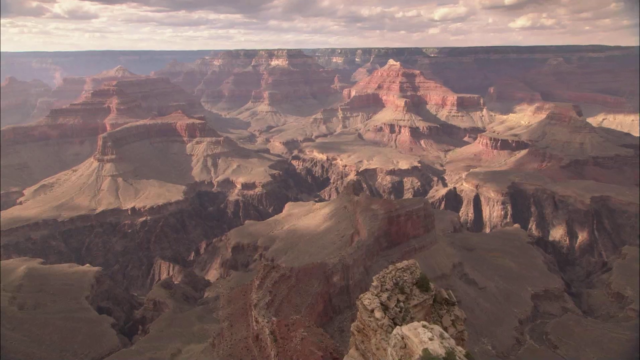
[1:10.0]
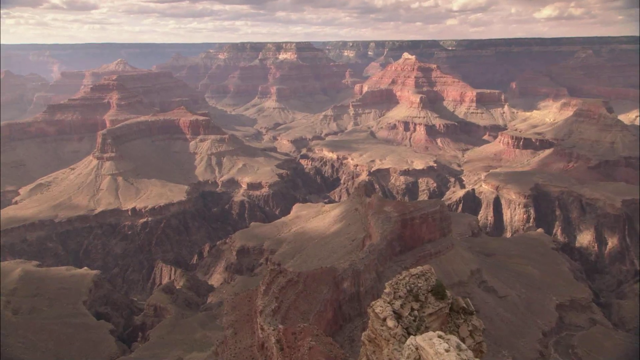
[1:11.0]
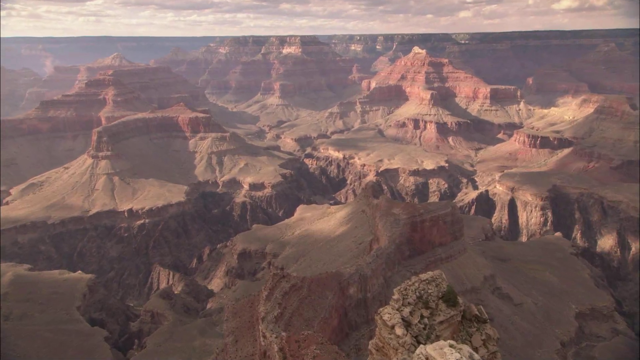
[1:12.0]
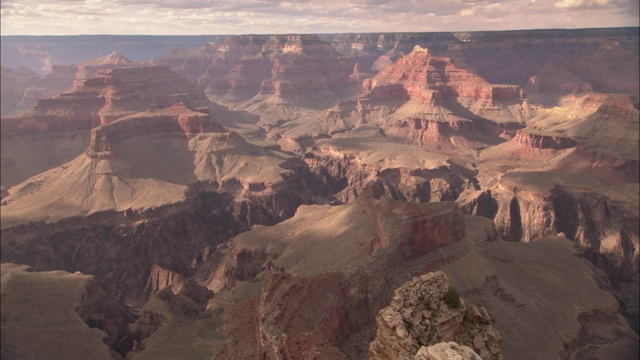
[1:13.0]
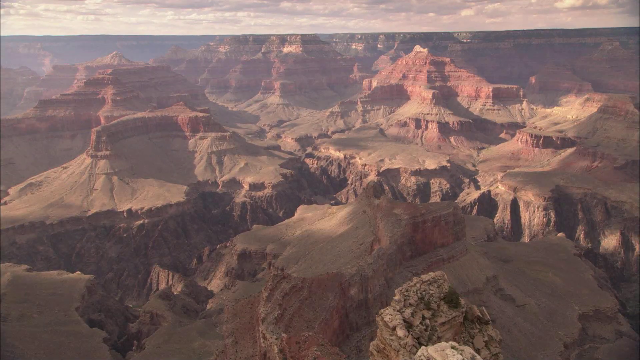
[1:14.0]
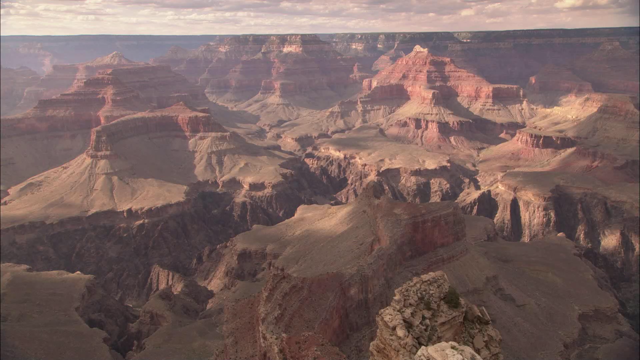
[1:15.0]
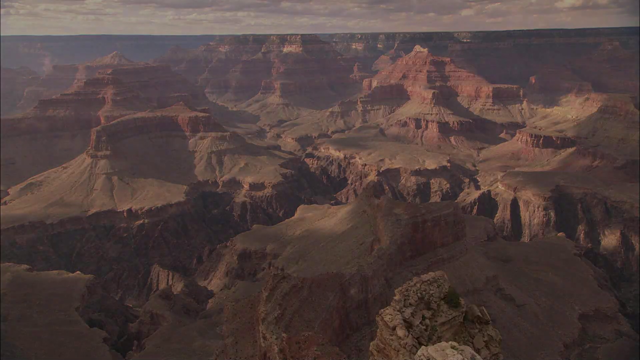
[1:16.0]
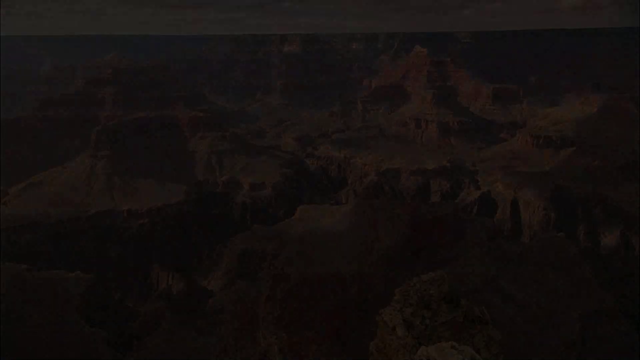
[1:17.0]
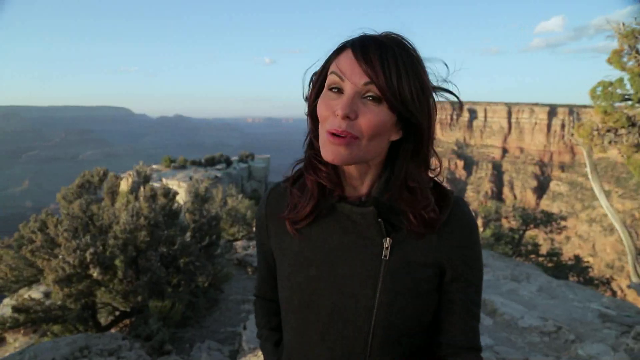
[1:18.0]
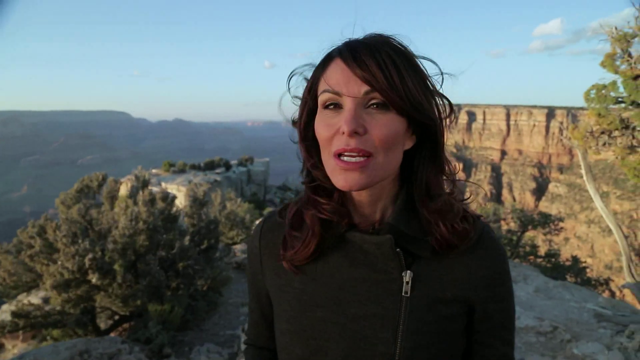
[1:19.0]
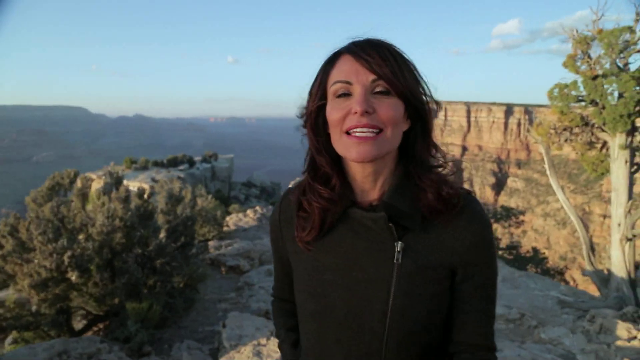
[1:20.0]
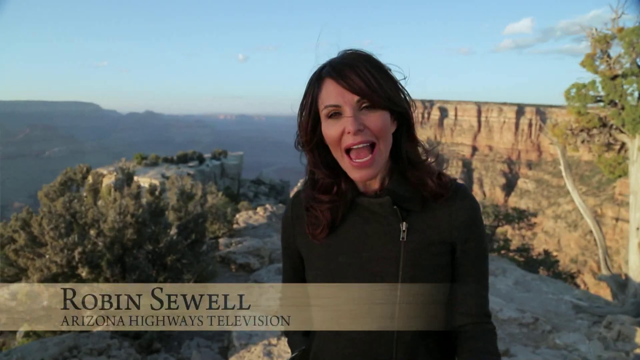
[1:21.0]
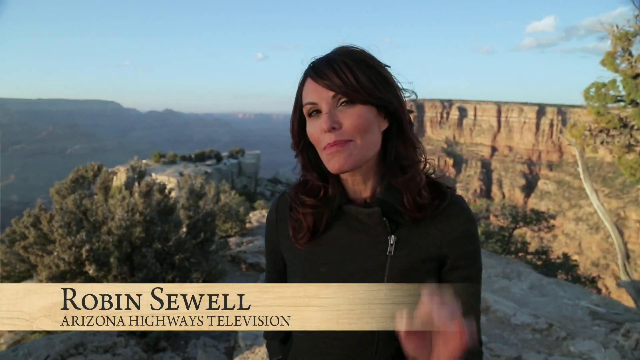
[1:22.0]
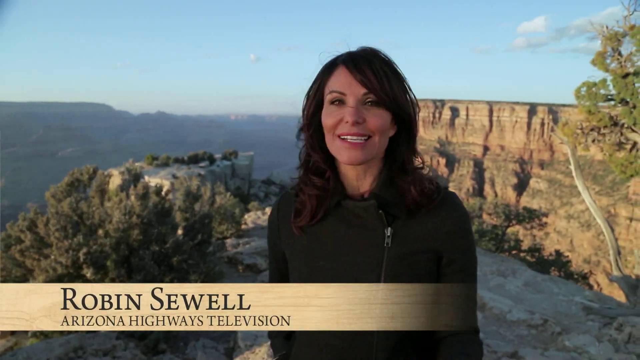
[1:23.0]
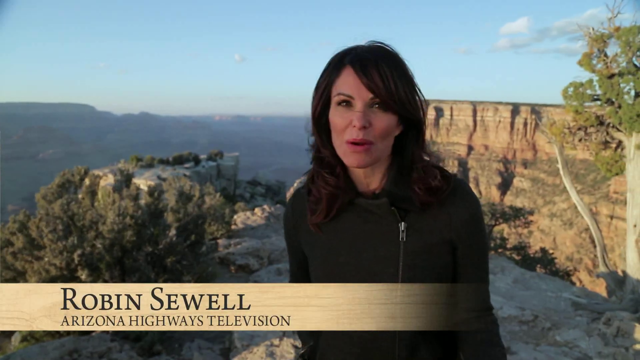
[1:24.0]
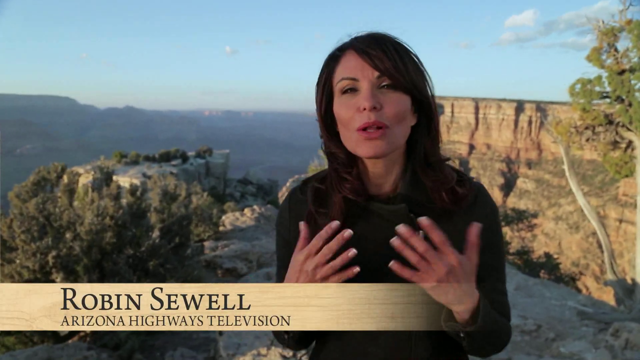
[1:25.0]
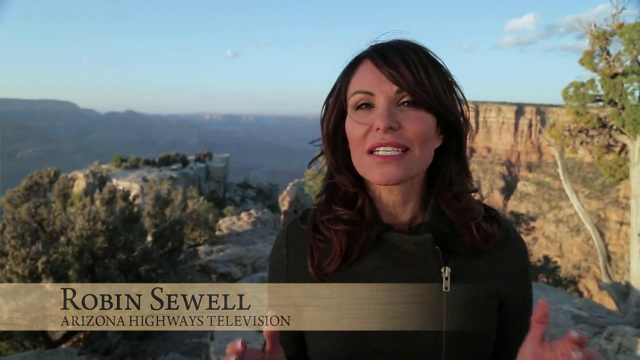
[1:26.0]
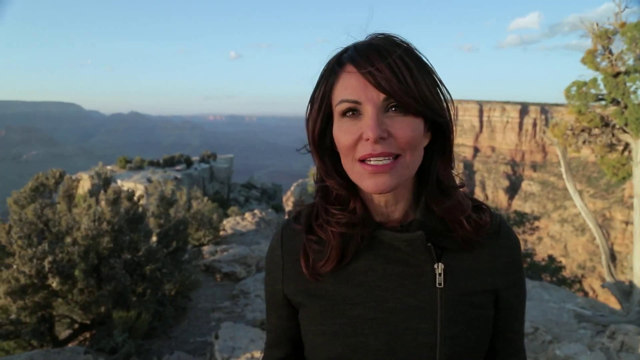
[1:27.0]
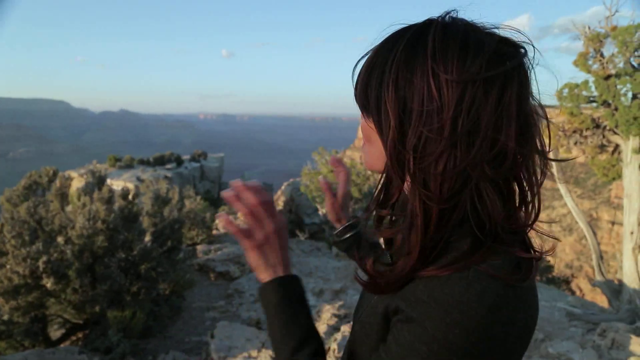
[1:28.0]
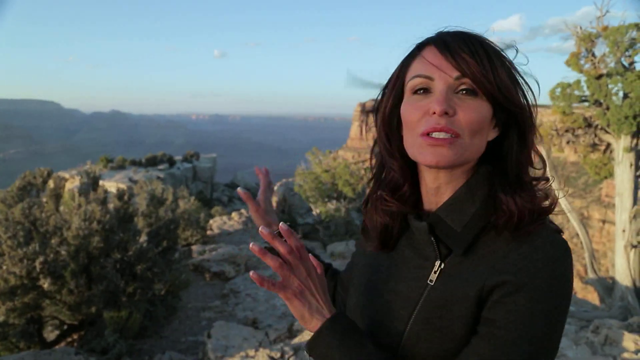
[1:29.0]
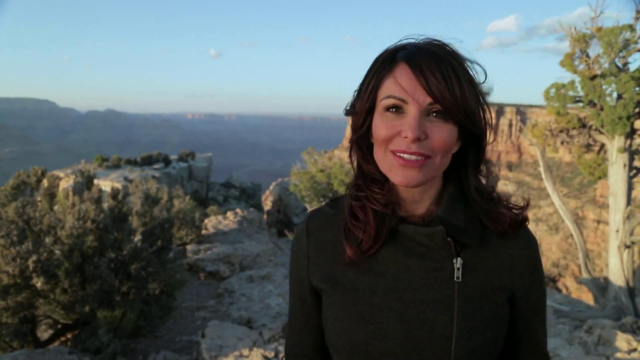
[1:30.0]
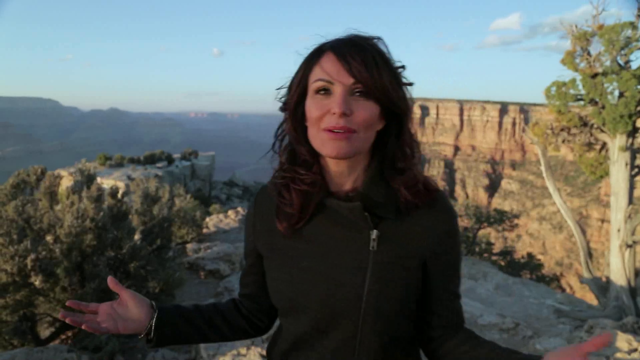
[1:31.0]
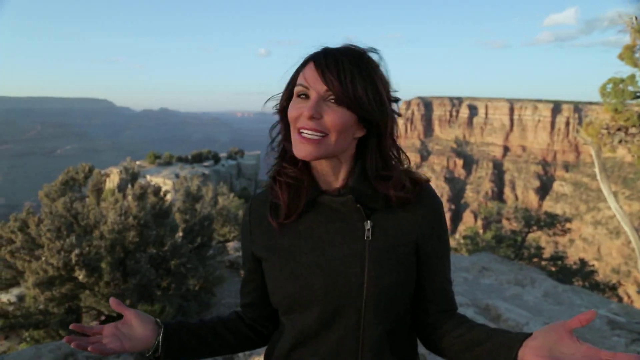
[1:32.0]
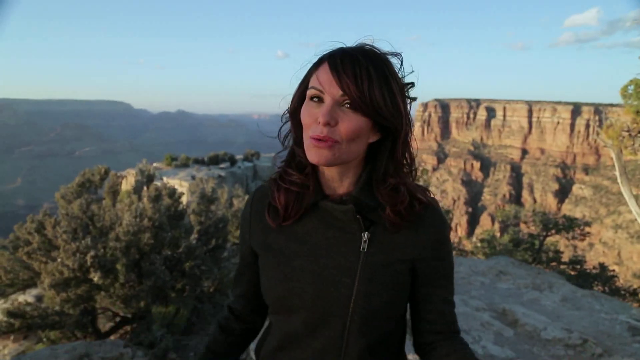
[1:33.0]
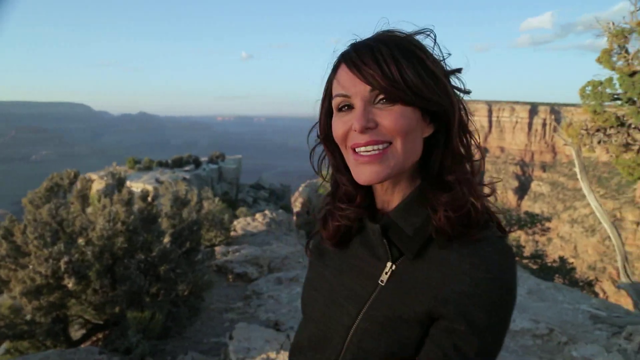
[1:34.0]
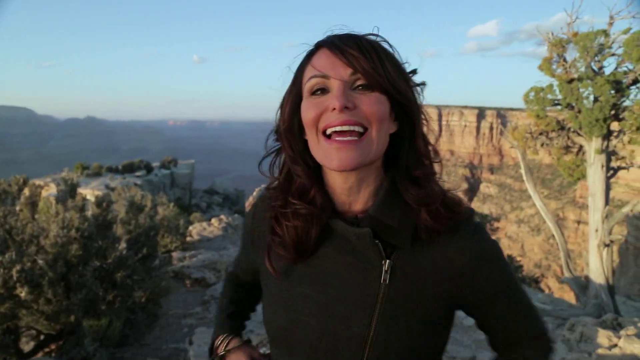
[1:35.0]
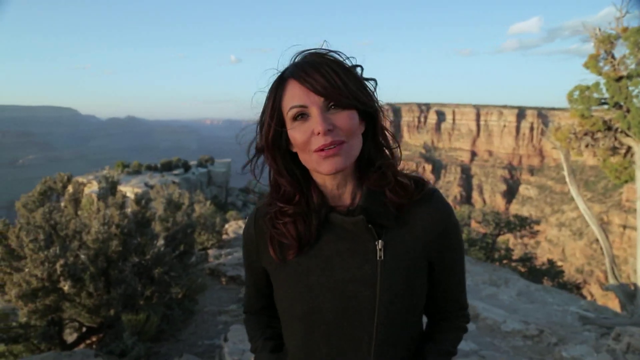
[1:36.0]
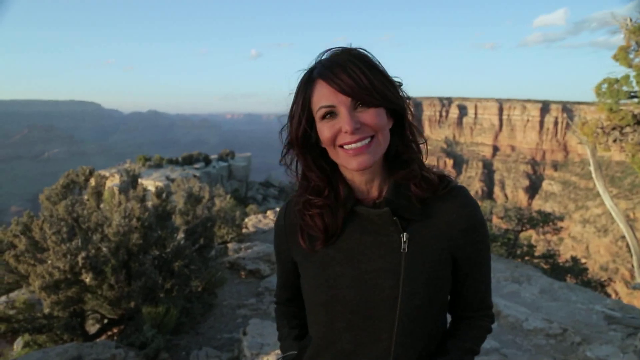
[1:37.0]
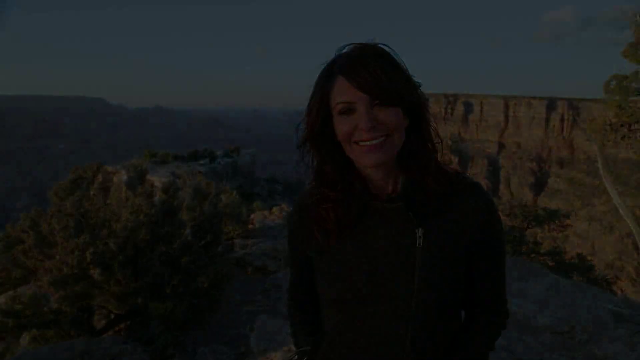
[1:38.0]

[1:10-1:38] The camera zooms in on the park, revealing a woman who appears to be in her late 30s, a presenter who shows the view. She stands in front of what looks like a table mounting and talks.